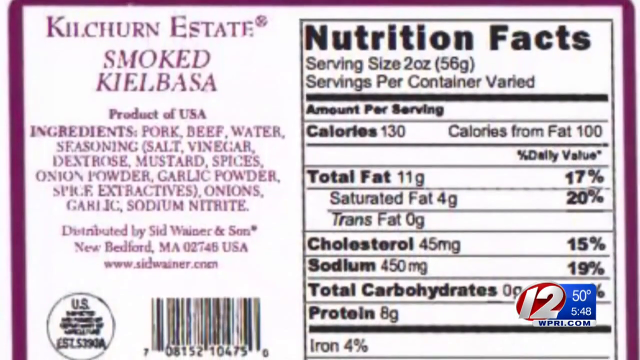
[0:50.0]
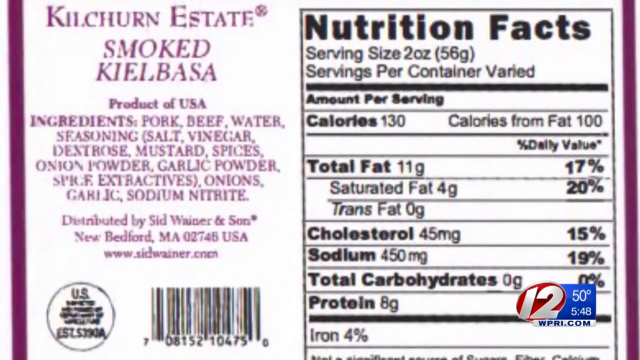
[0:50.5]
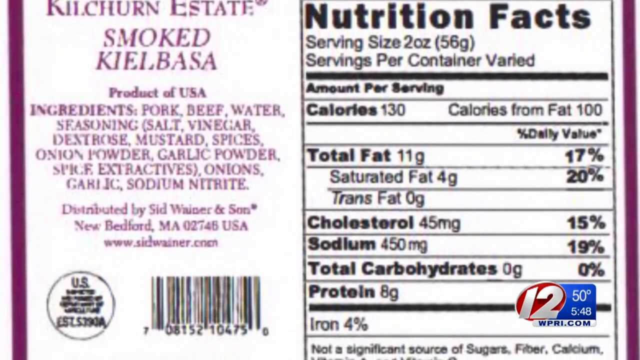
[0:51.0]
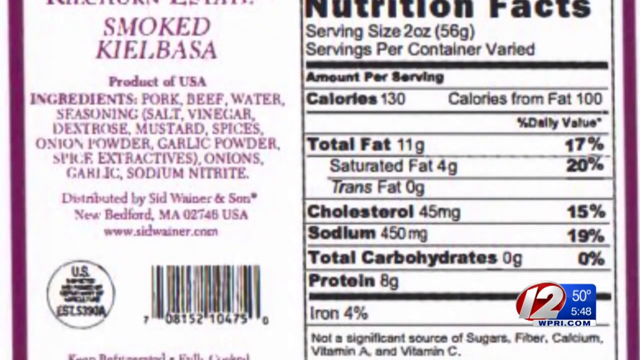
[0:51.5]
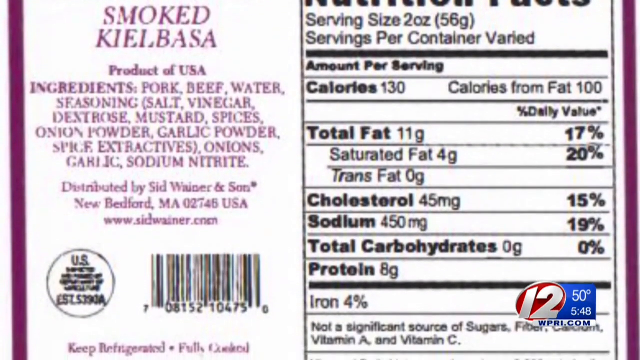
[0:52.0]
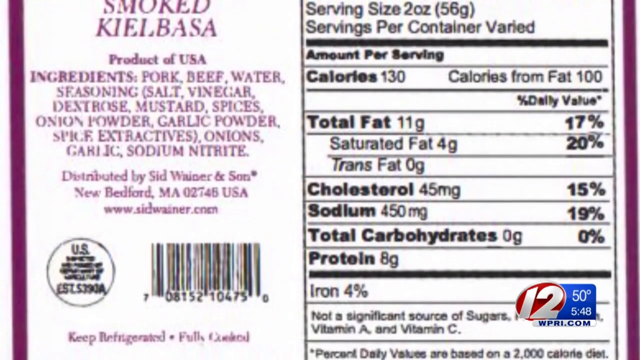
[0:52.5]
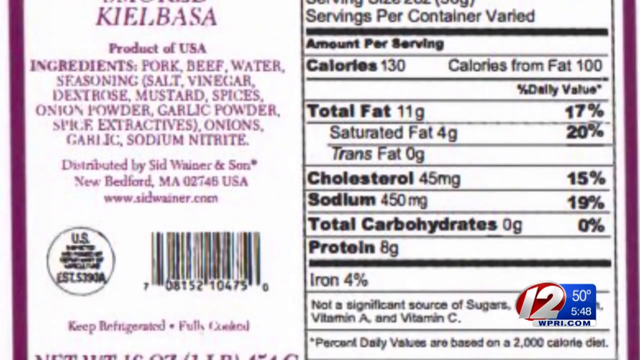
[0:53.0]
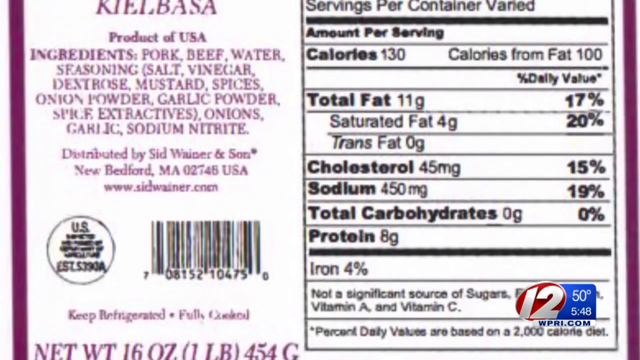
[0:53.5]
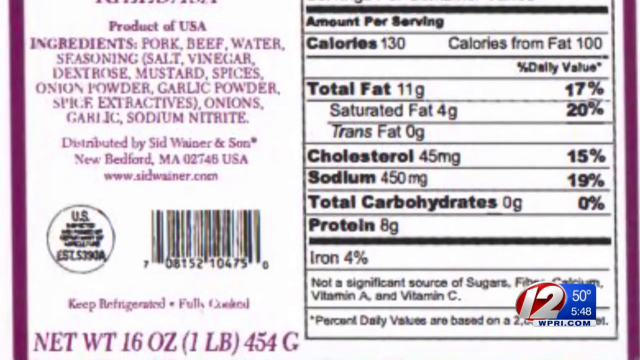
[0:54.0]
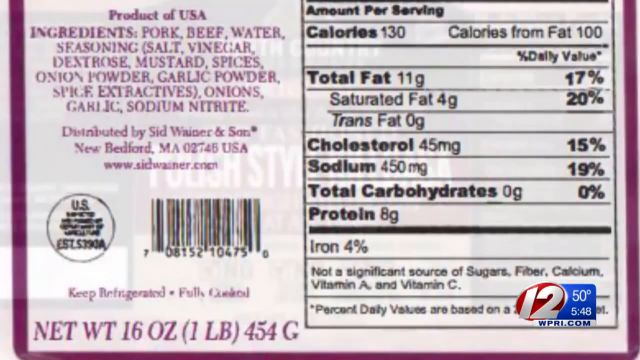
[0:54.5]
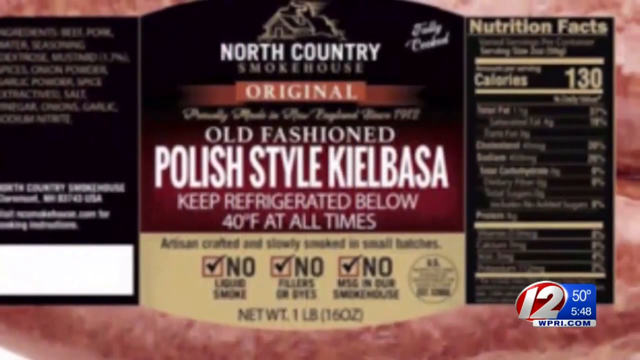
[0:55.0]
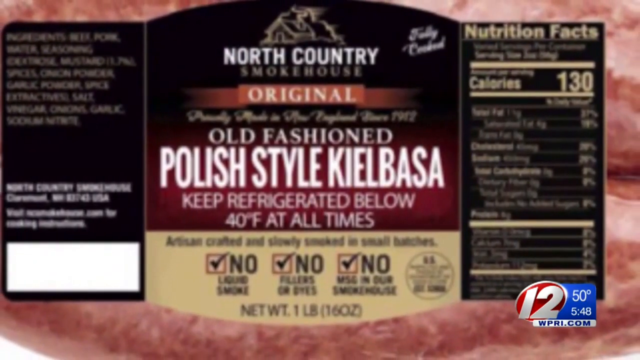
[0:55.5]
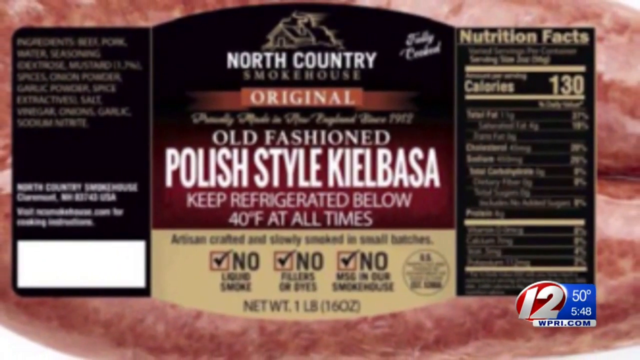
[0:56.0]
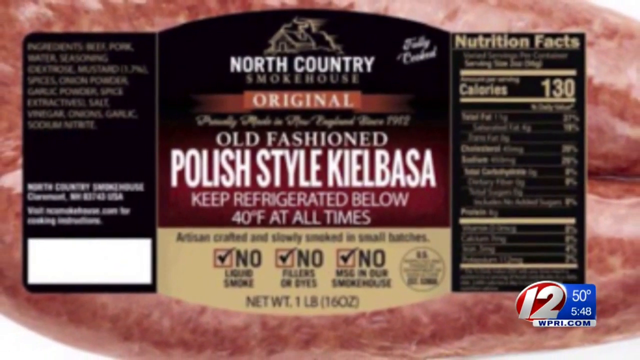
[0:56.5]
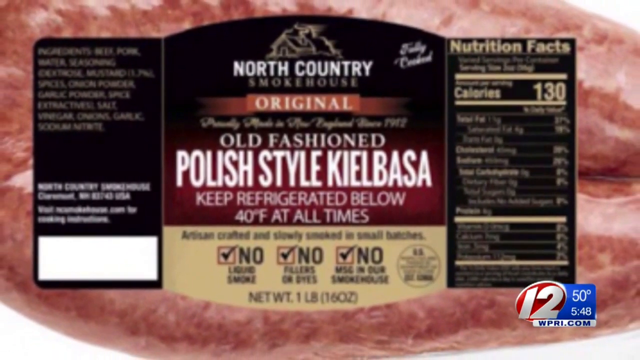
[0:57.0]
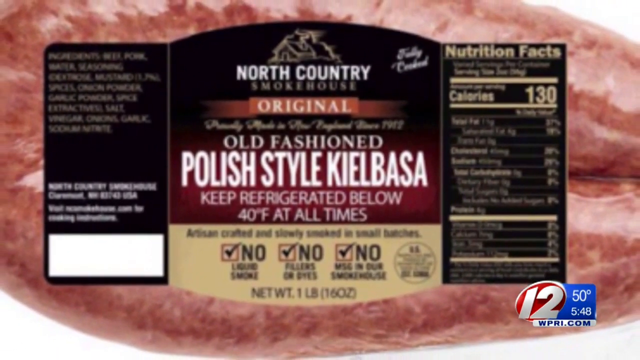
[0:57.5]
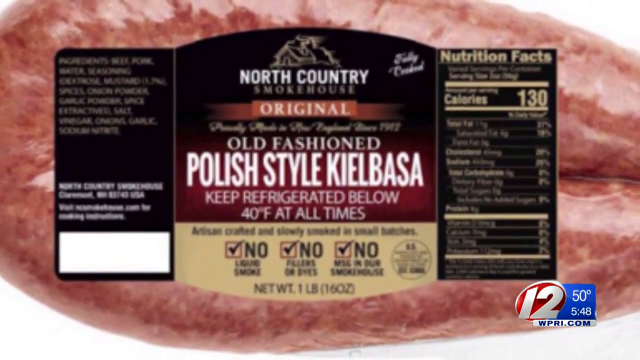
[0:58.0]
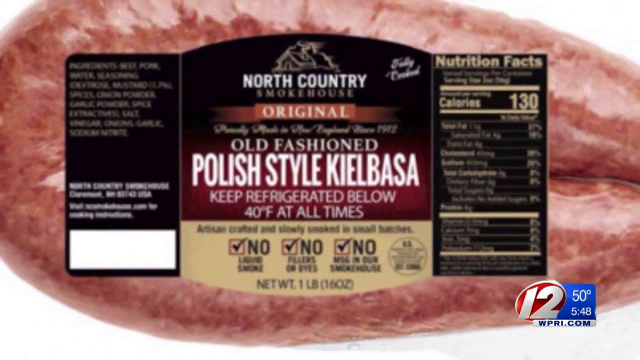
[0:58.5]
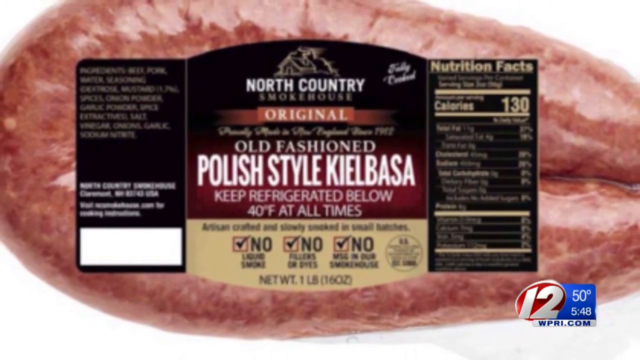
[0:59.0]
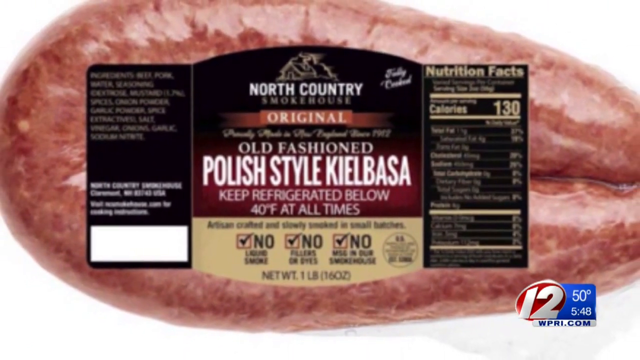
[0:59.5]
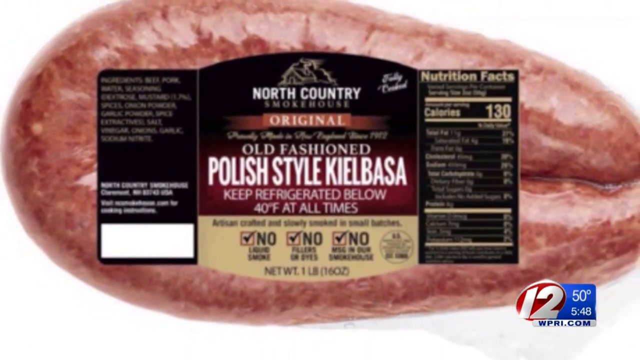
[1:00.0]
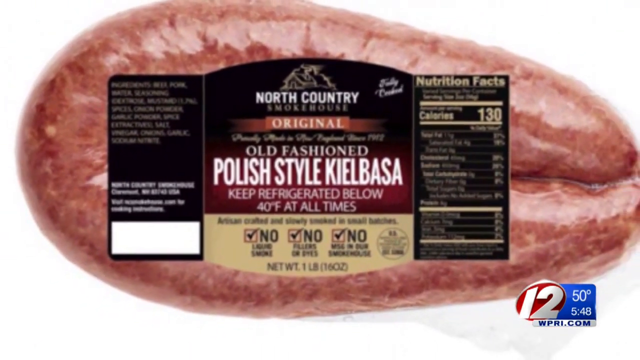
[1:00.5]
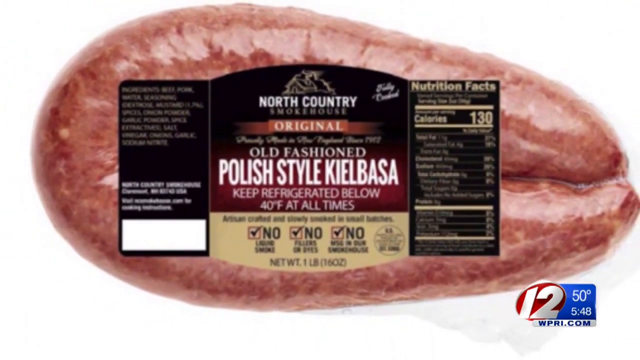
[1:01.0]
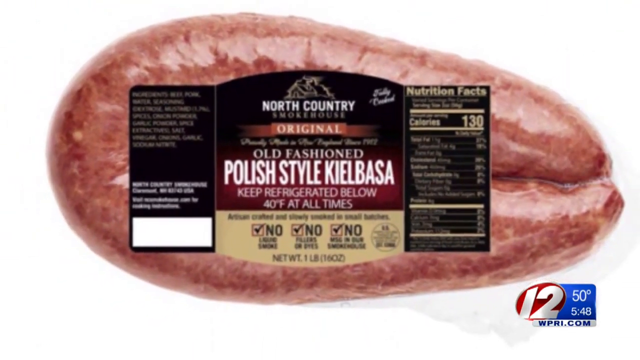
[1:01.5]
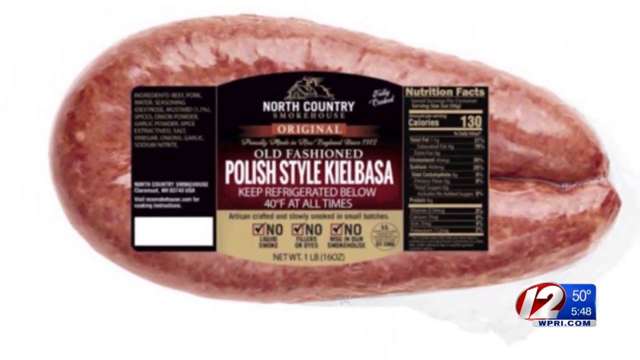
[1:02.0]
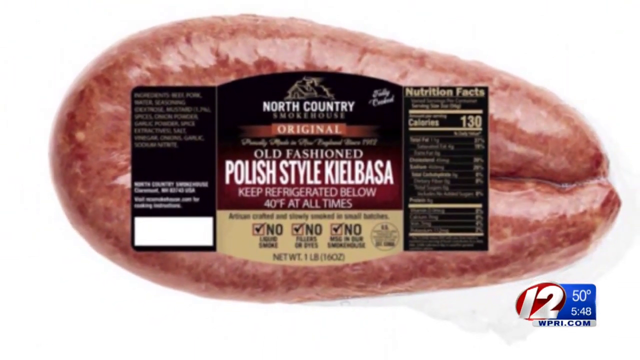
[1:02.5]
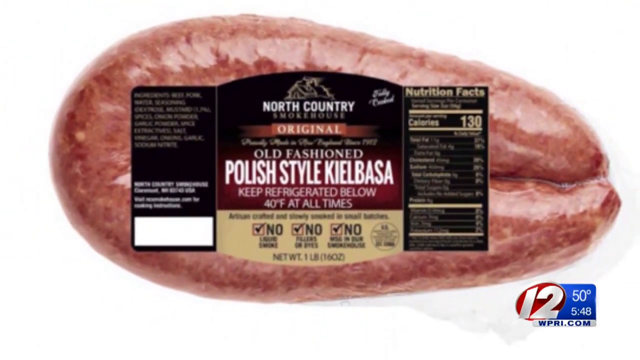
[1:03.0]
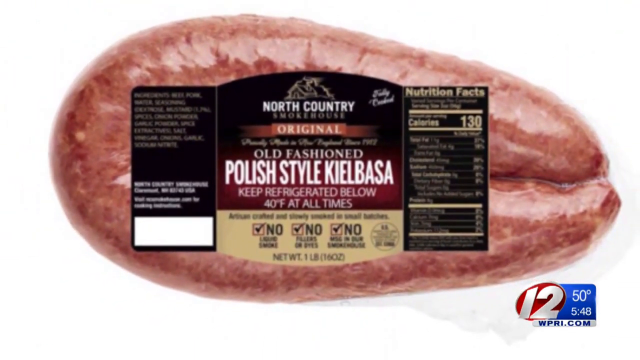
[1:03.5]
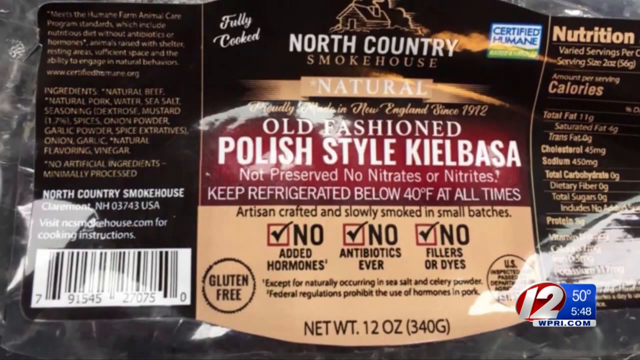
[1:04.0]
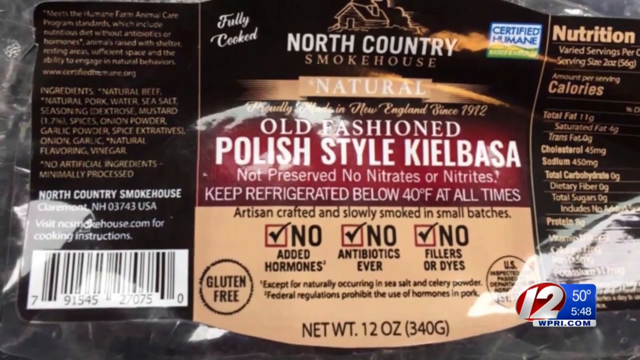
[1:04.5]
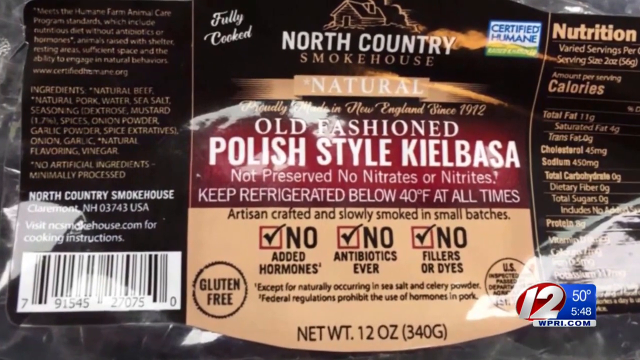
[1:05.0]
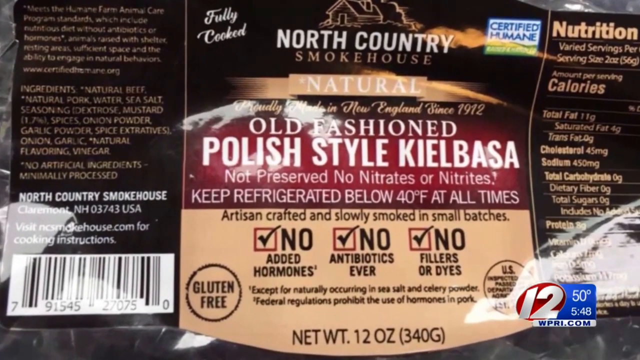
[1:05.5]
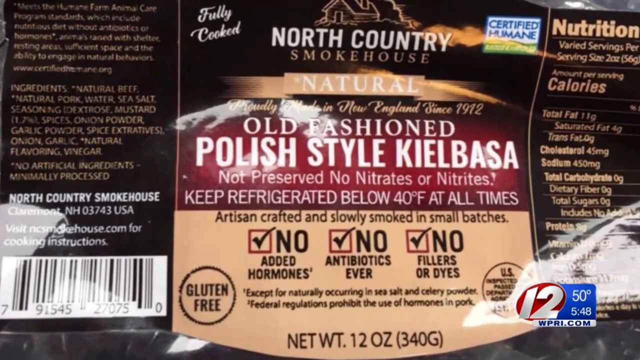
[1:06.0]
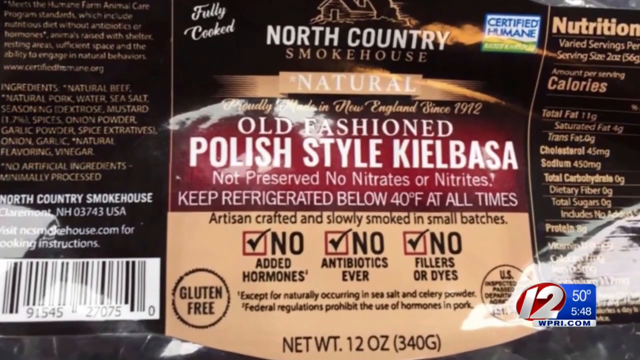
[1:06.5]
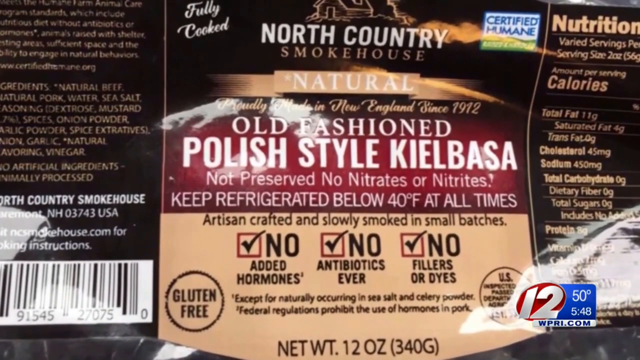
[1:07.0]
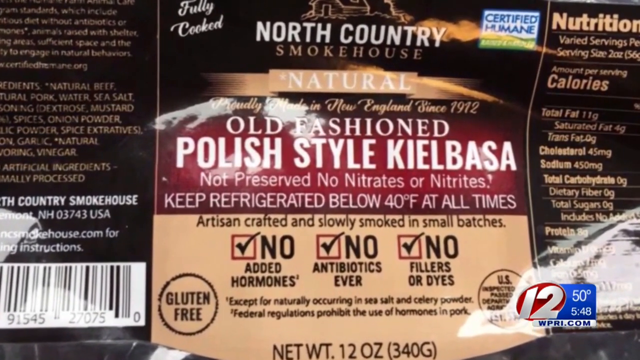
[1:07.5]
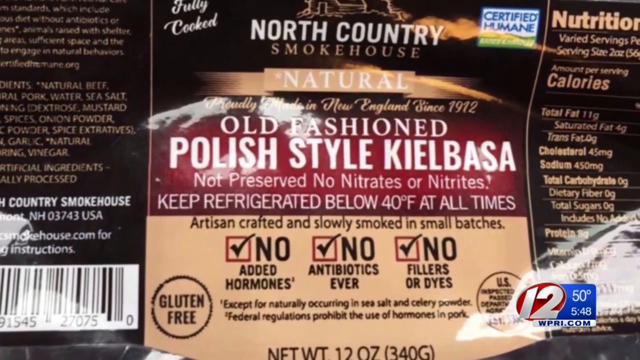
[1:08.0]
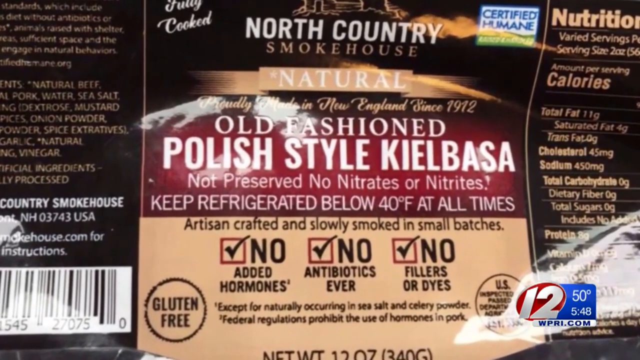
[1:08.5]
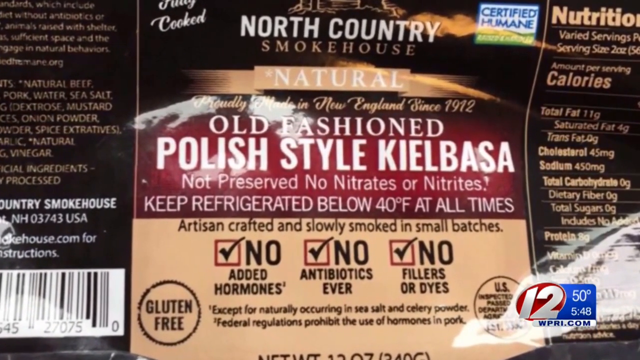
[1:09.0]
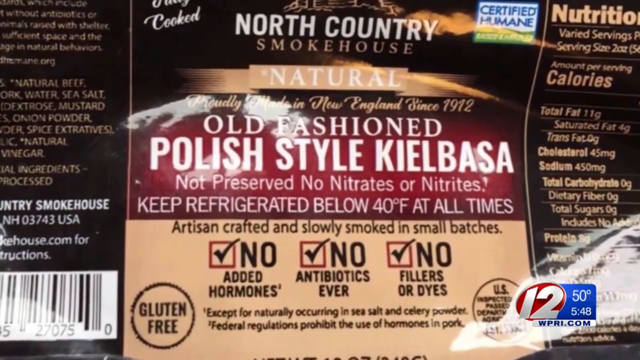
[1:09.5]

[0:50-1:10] The nutrition facts for old-fashioned Polish-style kielbasa sausages are shown in full detail: 130 calories, 11 grams of total fat, 45 milligrams of cholesterol, 450 milligrams of sodium, zero carbs and 8 grams of protein. This is apparently the News You Can Use segment.